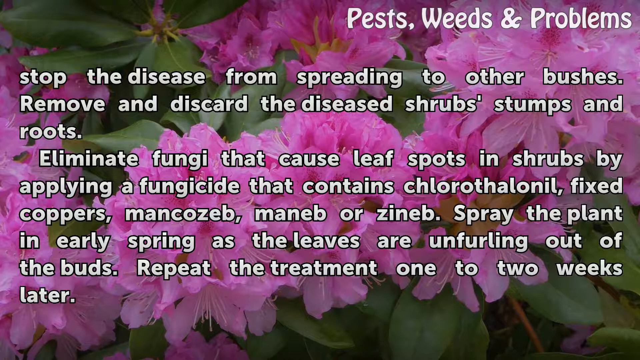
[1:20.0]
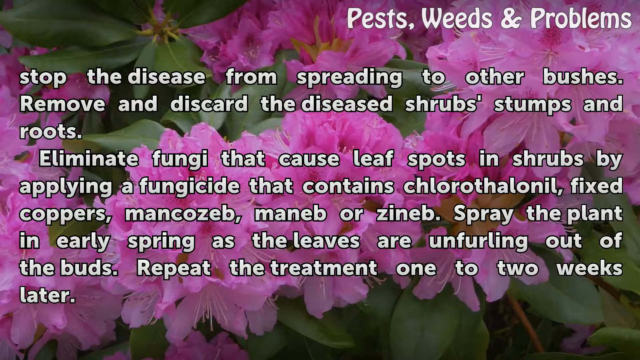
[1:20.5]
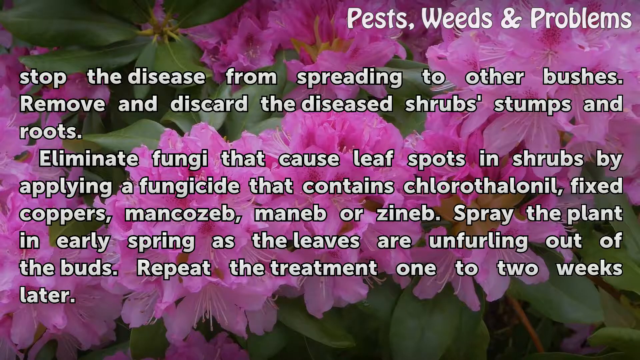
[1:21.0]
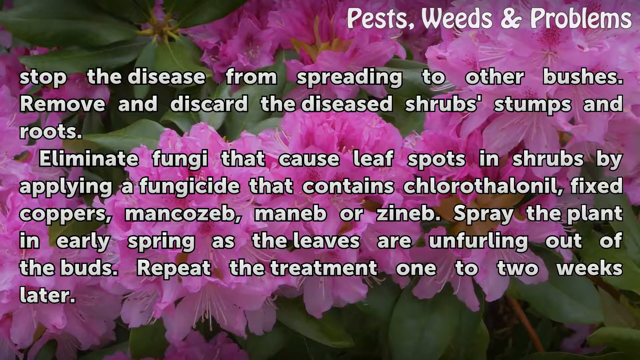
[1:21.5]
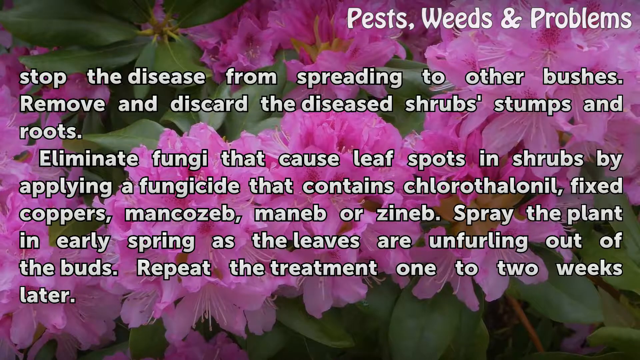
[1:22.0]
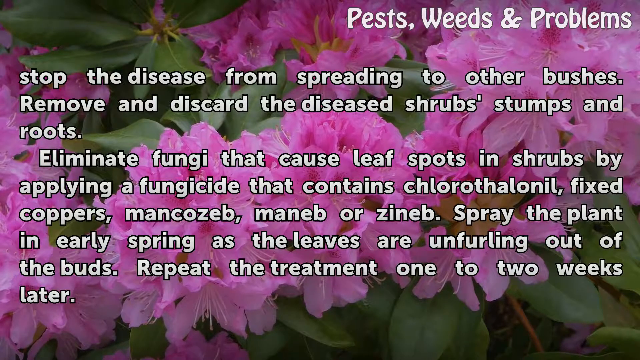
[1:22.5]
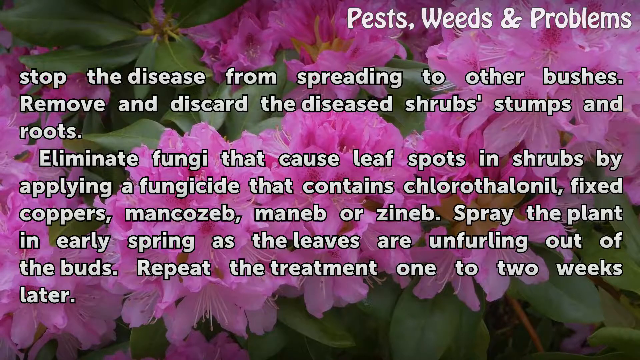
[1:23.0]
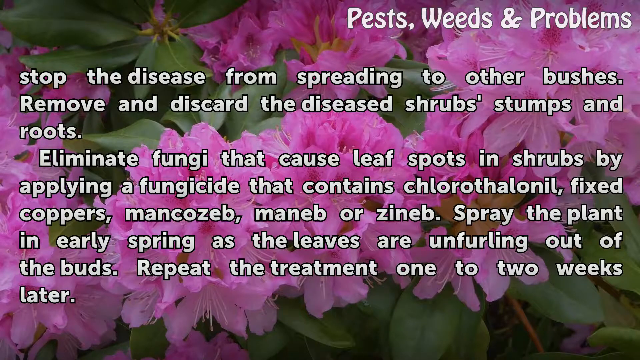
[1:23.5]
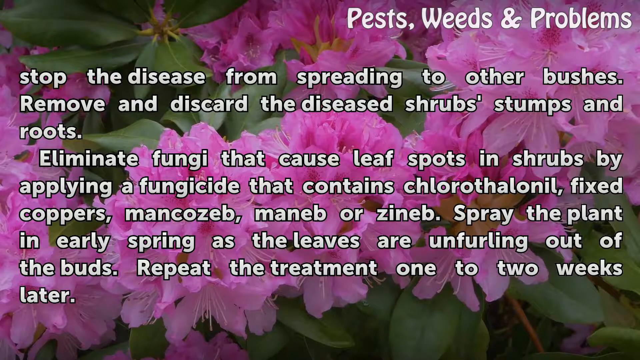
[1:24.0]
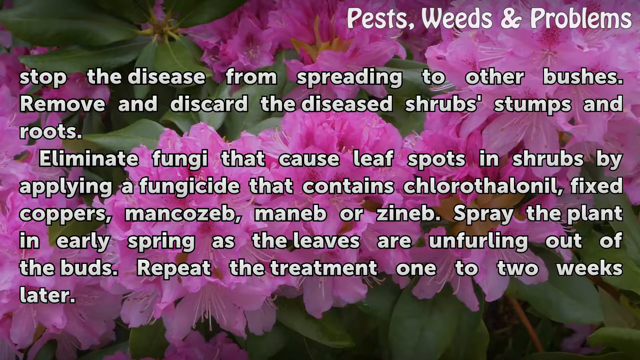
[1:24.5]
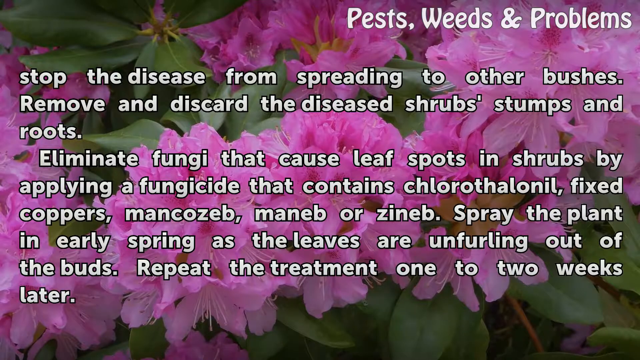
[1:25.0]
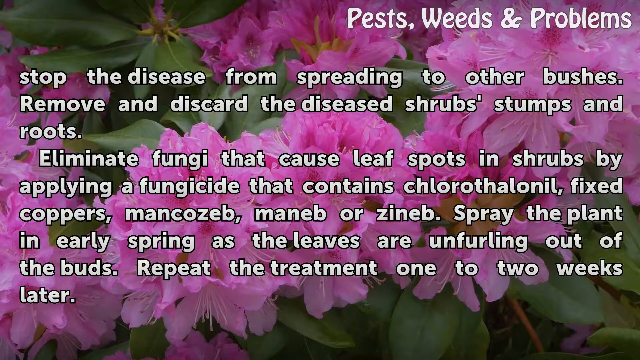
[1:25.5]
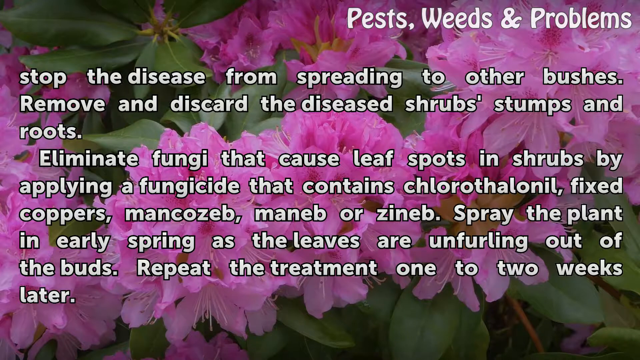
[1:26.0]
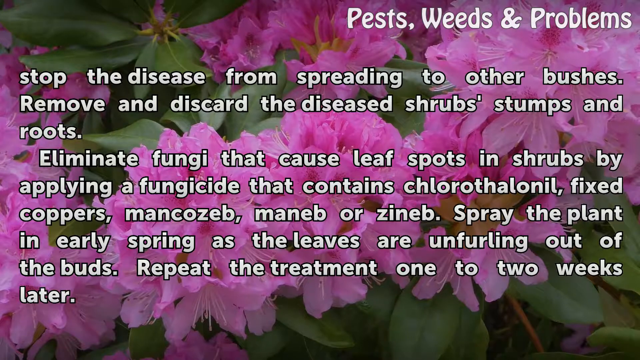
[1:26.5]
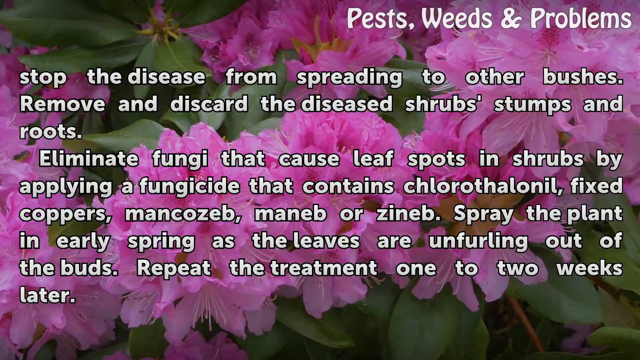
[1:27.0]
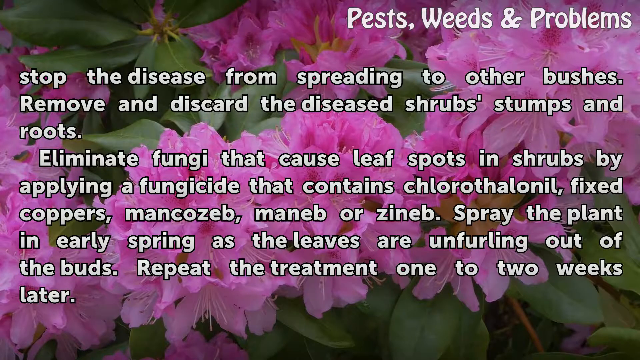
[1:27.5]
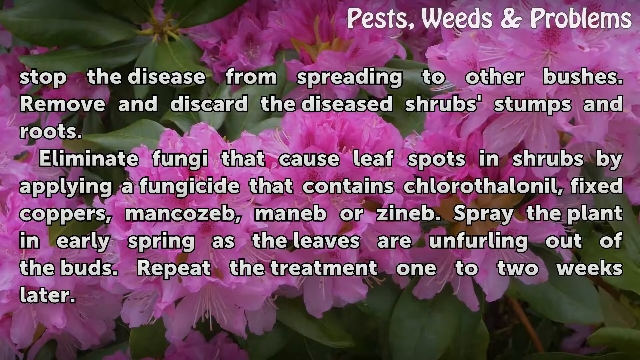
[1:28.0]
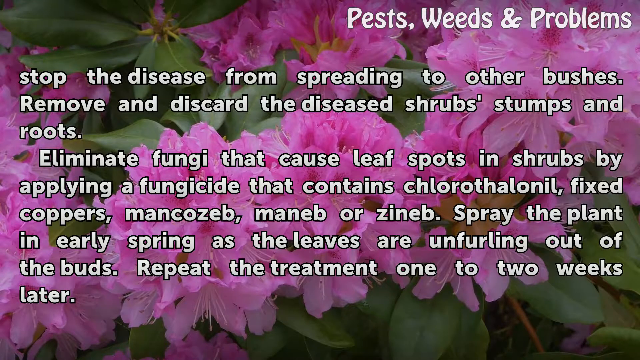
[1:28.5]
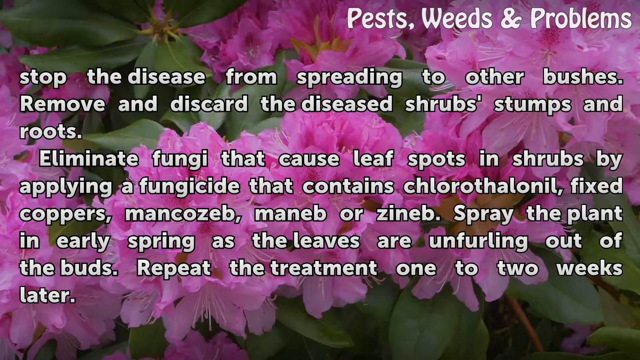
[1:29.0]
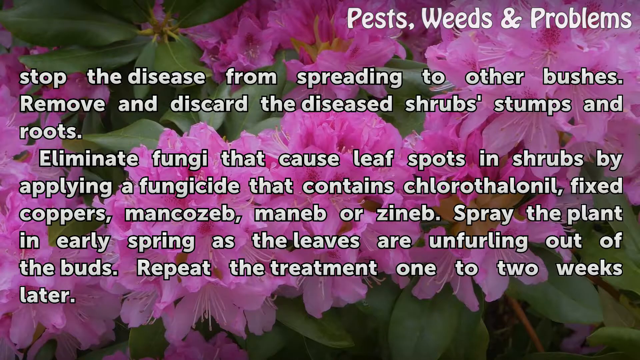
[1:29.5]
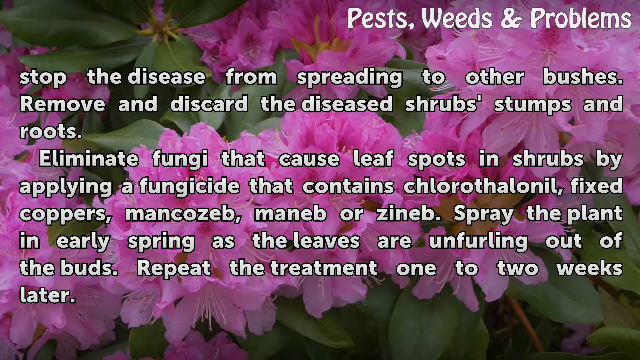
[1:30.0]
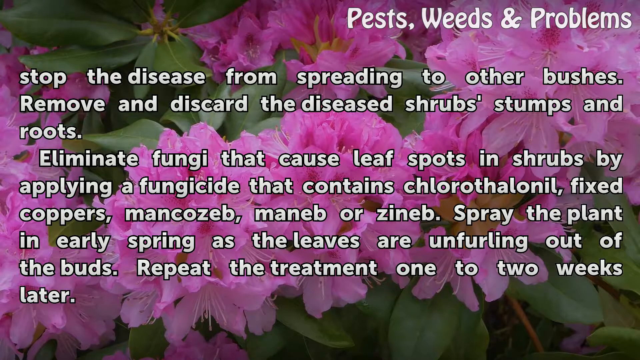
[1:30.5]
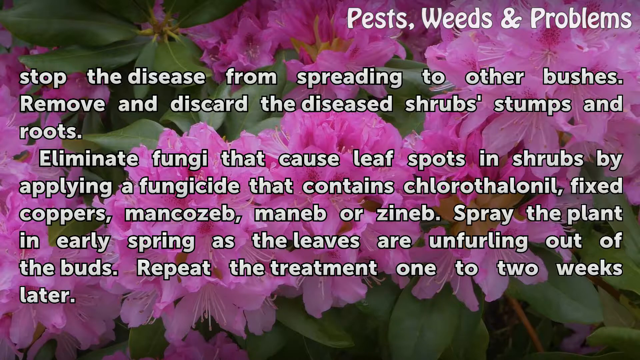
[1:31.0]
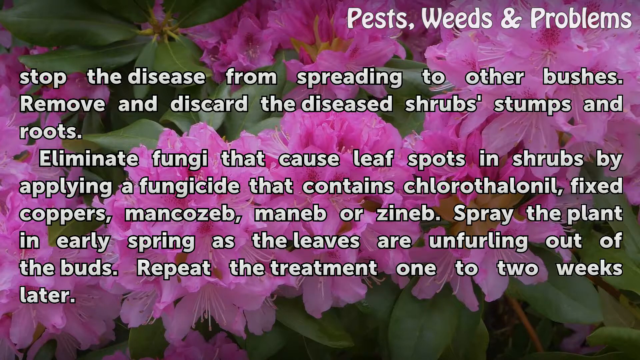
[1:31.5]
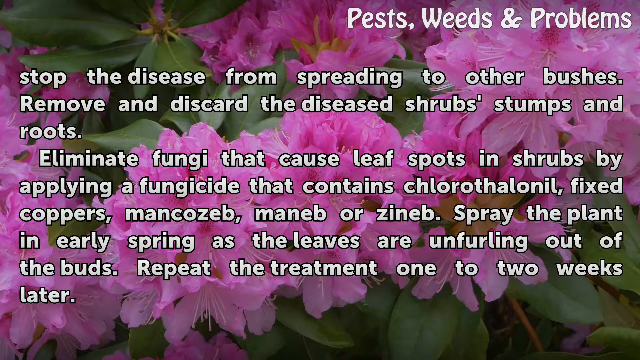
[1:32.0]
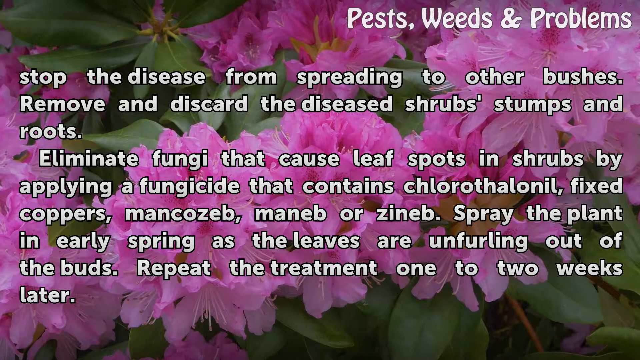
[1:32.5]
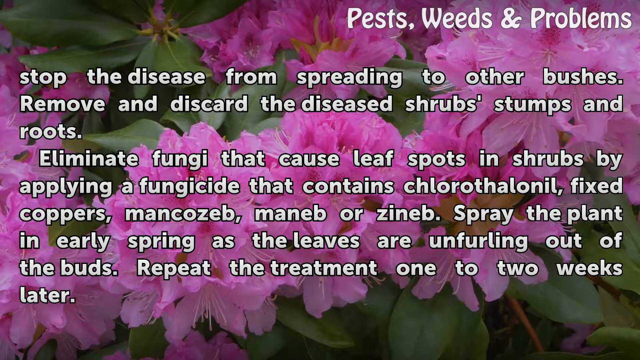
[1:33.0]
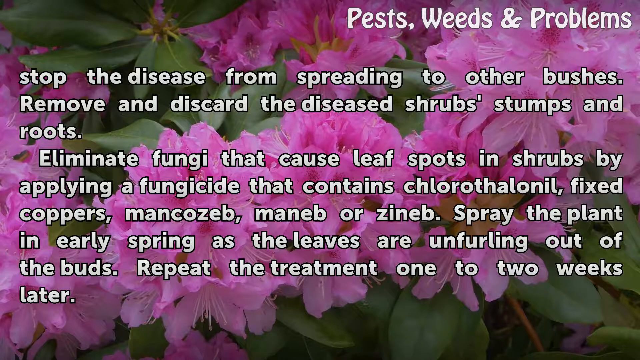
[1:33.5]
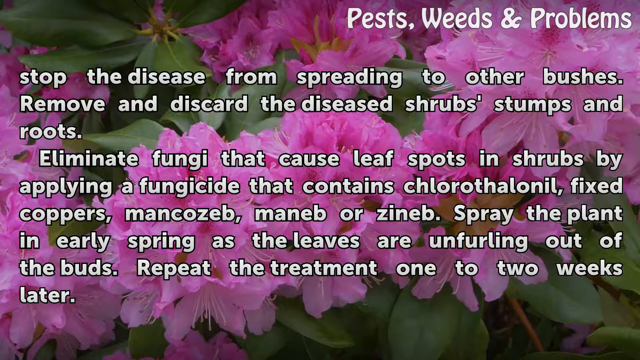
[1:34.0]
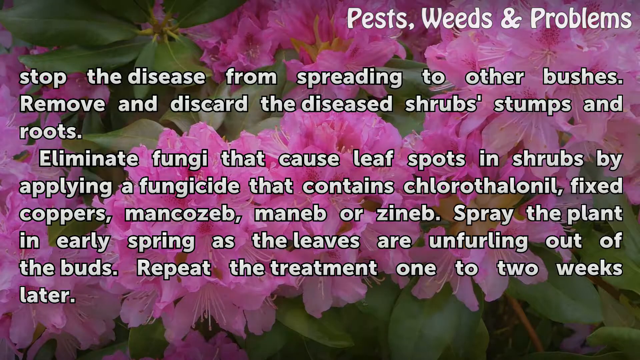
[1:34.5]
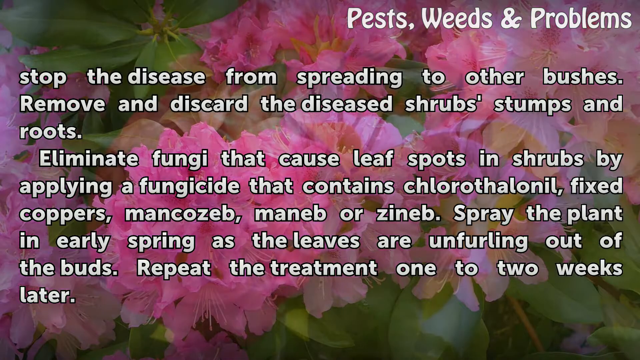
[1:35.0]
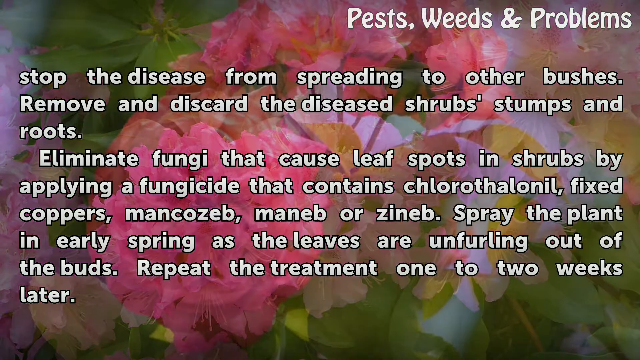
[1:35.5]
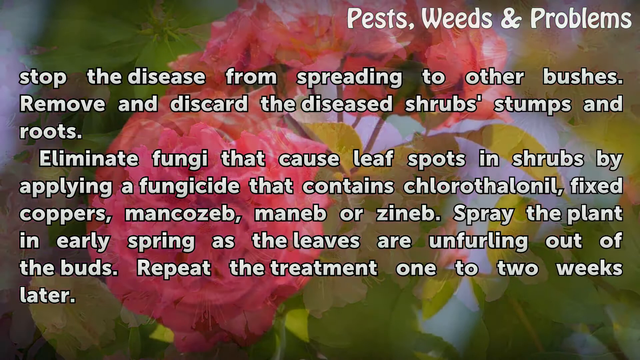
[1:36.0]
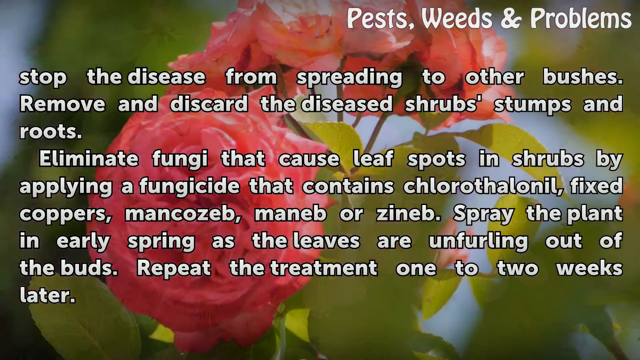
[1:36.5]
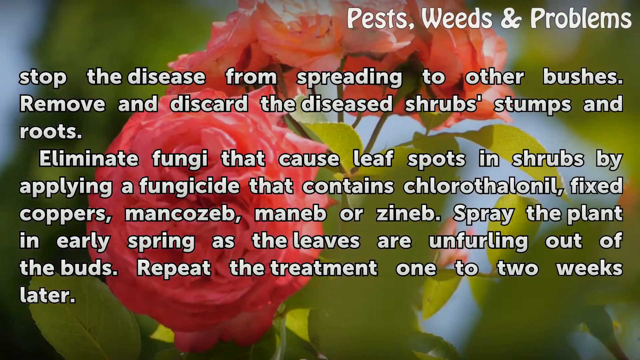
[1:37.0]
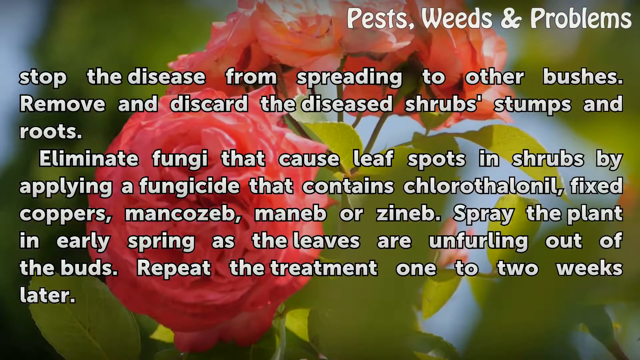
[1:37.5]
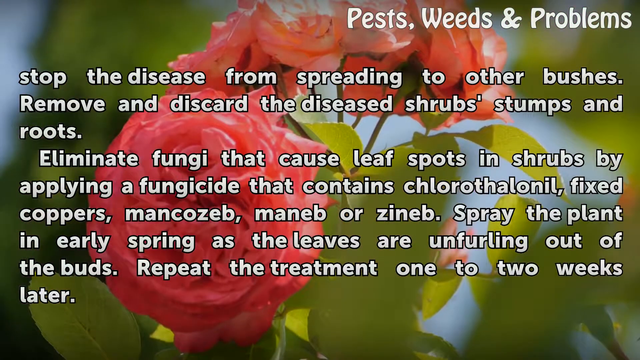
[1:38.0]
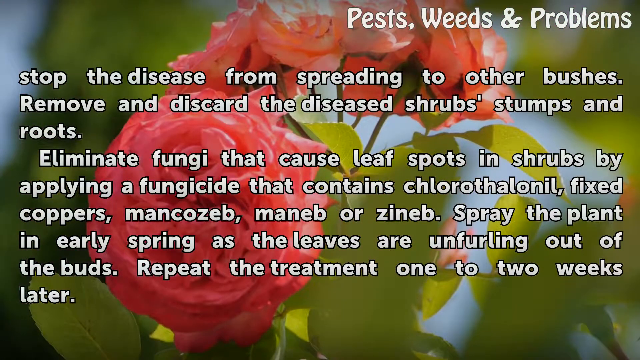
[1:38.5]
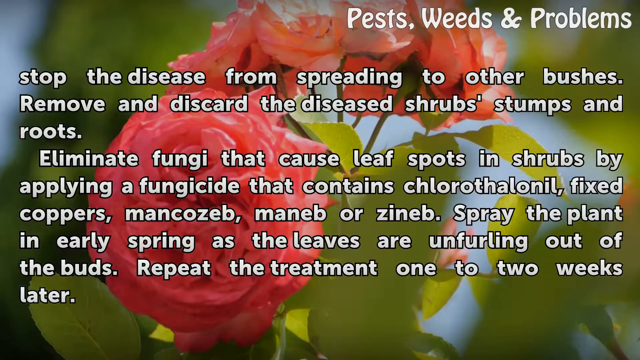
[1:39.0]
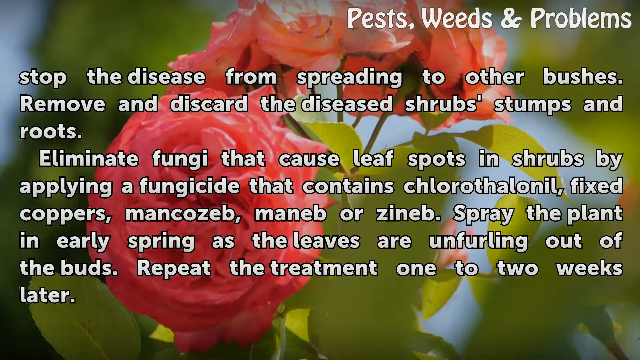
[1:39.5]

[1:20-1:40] The background shows clusters of bright pink flowers with green leaves. The words "Pest, Weeds, and Problems" in white letters are in the top right-hand corner and remain on the screen the whole time. The rest of the screen is filled with nine lines of white text: "stop the disease from spreading to other bushes.", "Remove and discard the diseased shrubs' stumps and", "roots.", then, beginning a new paragraph, "Eliminate fungi that cause leaf spots in shrubs by", "applying a fungicide that contains chlorothalonil, fixed", "coppers, mancozeb, maneb, and zineb. Spray the plant", "in early spring as the leaves are unfurling out of", "the buds. Repeat the treatment one to two weeks" and "later." After a few seconds the background slowly fades and switches to a picture of coral-colored flowers that look like they may be roses, with a bunch of them at the top of the screen and a single one facing the camera, and blurry green leaves in the background. The text remains the same.